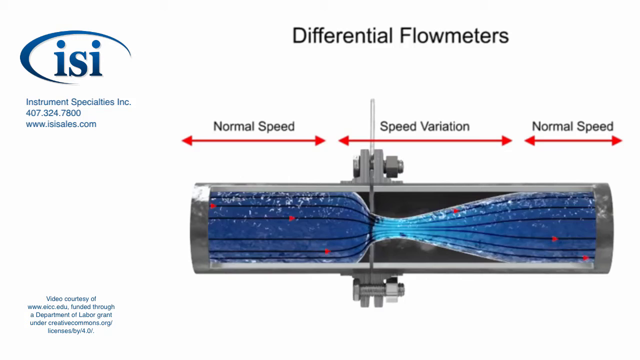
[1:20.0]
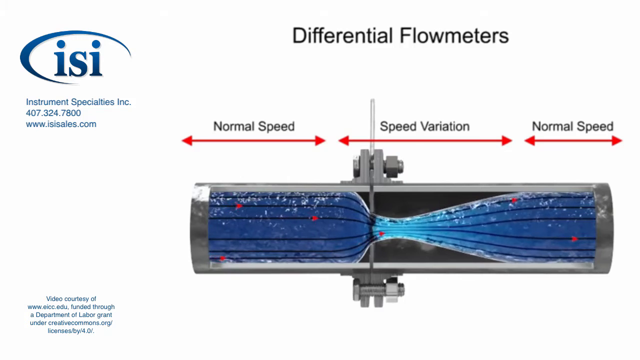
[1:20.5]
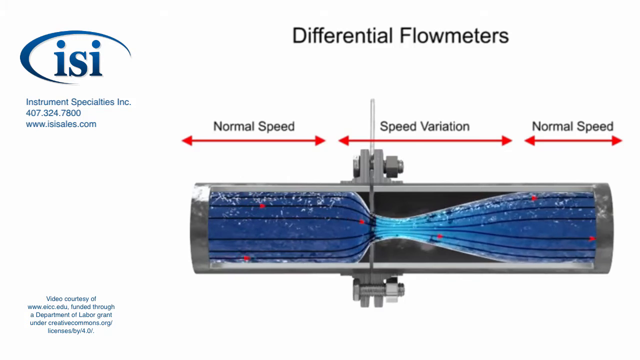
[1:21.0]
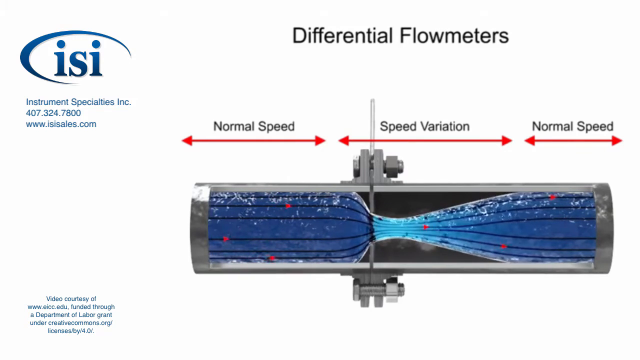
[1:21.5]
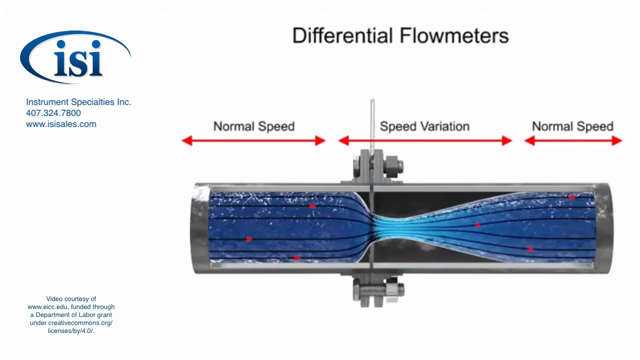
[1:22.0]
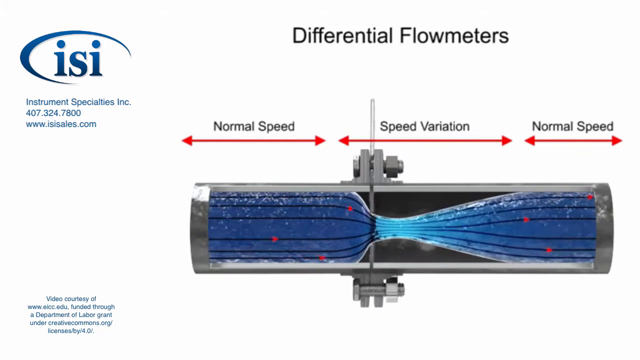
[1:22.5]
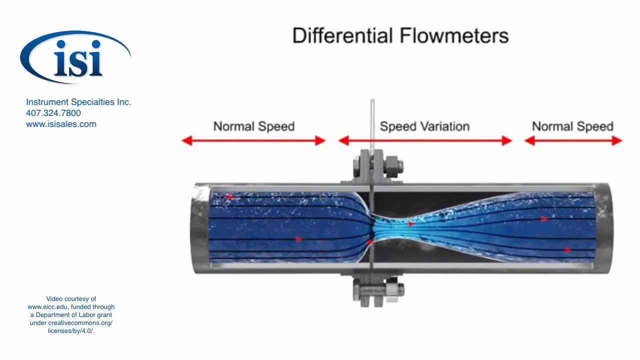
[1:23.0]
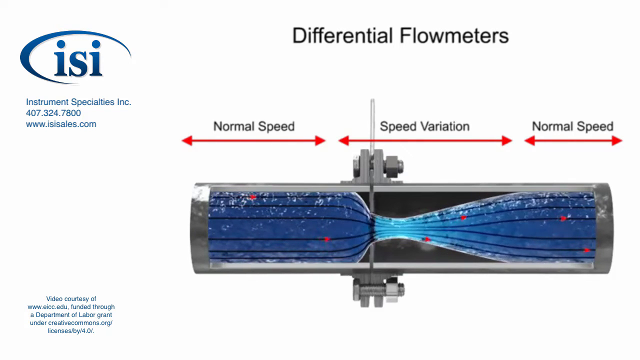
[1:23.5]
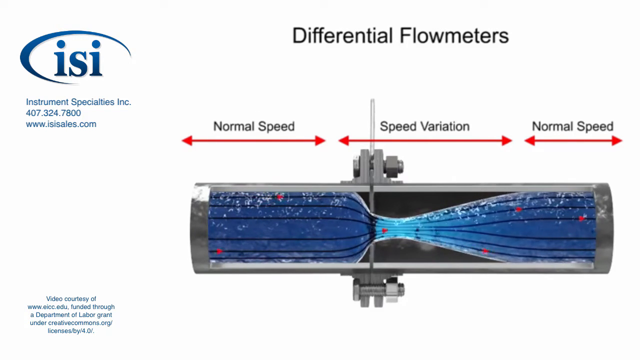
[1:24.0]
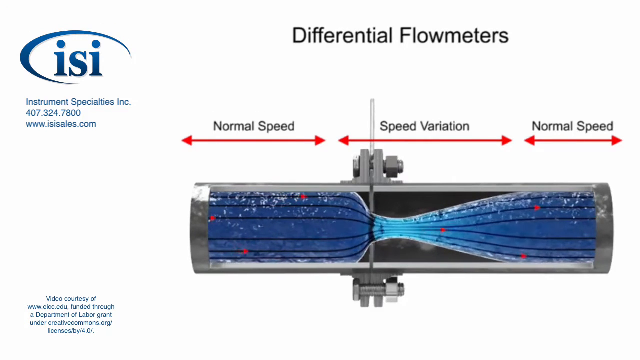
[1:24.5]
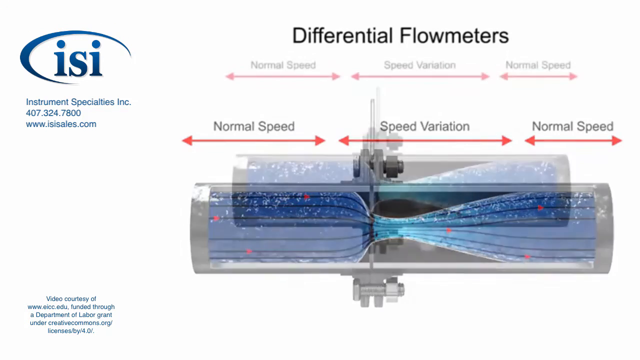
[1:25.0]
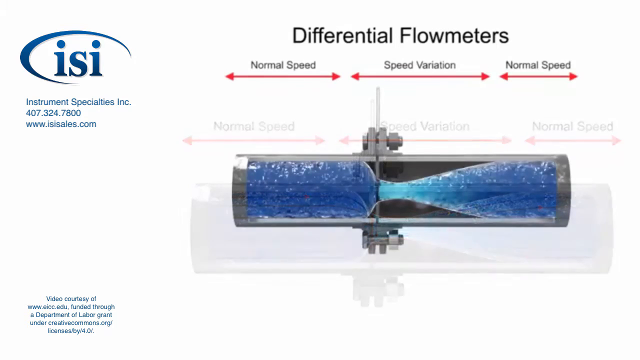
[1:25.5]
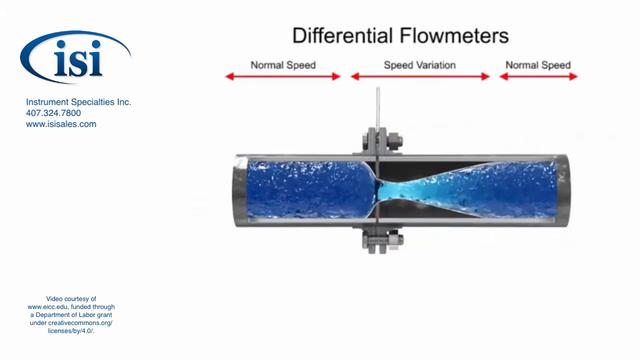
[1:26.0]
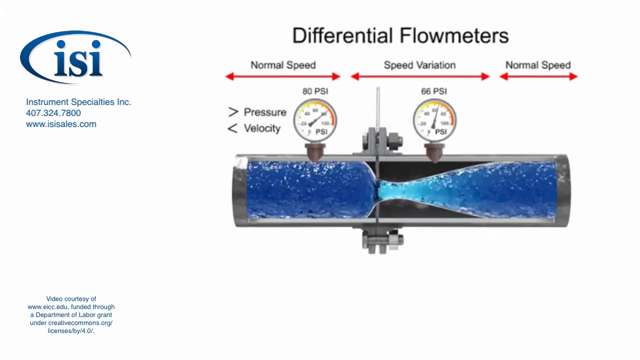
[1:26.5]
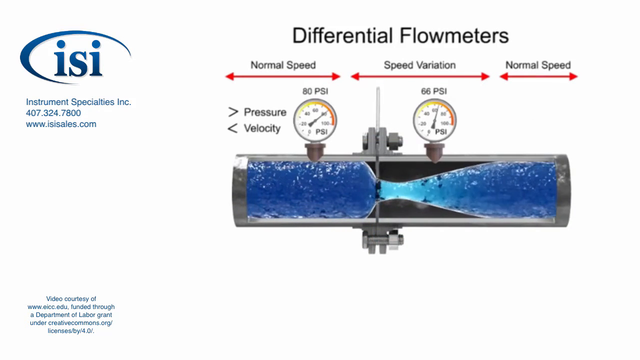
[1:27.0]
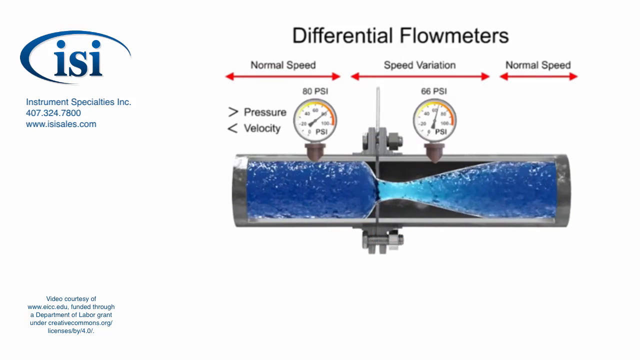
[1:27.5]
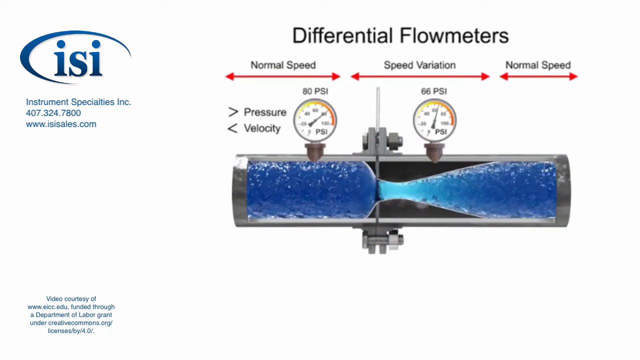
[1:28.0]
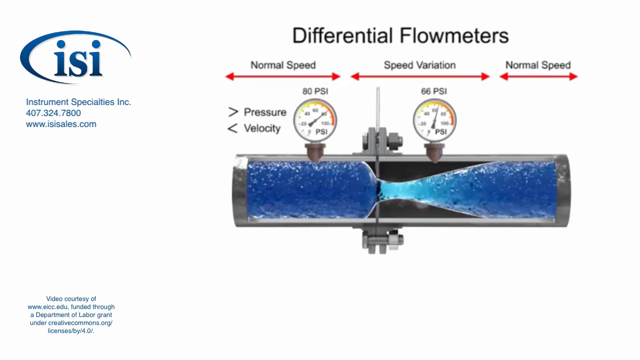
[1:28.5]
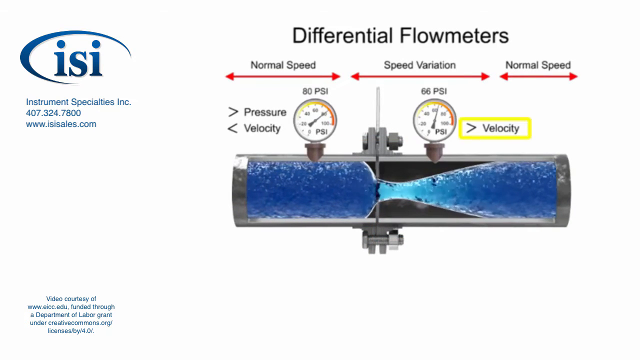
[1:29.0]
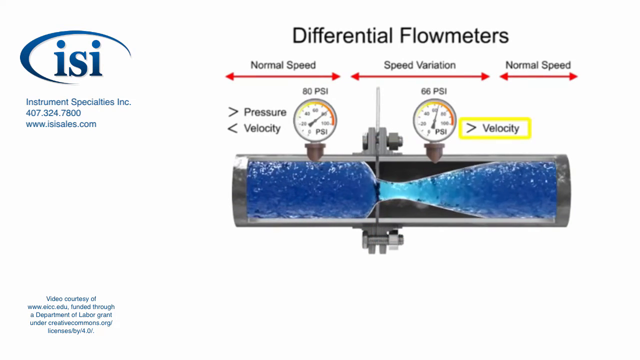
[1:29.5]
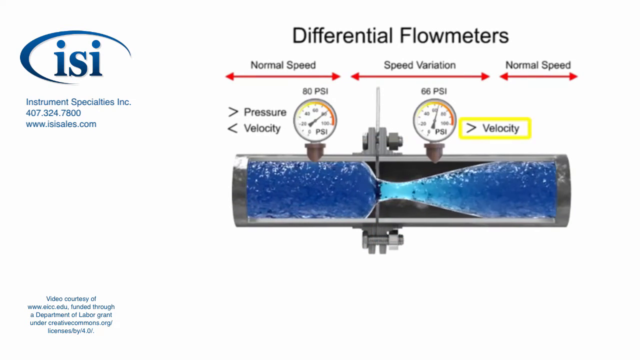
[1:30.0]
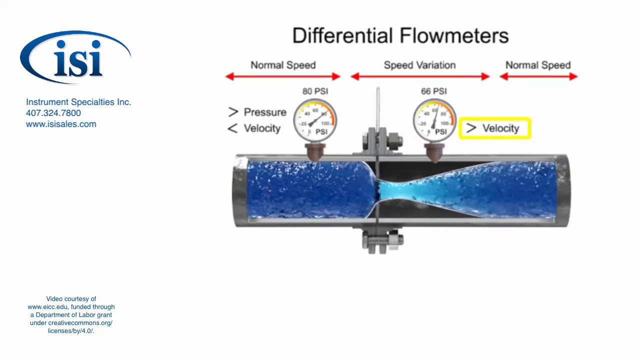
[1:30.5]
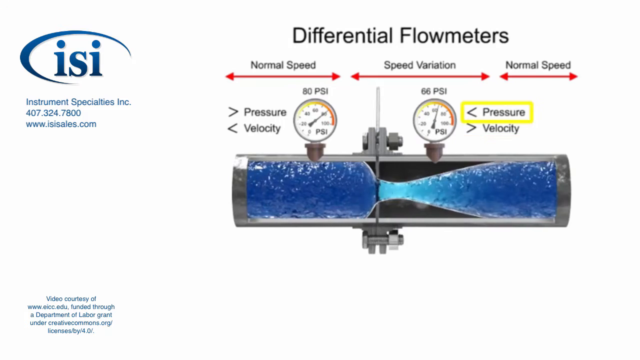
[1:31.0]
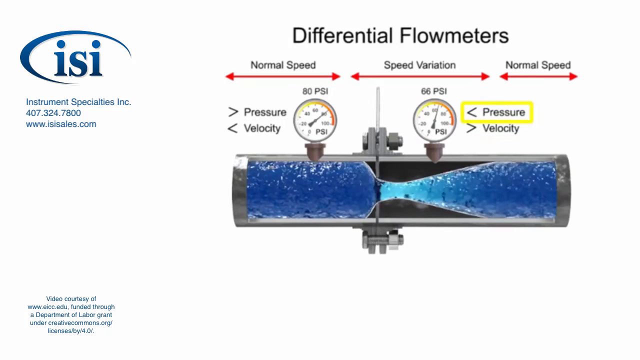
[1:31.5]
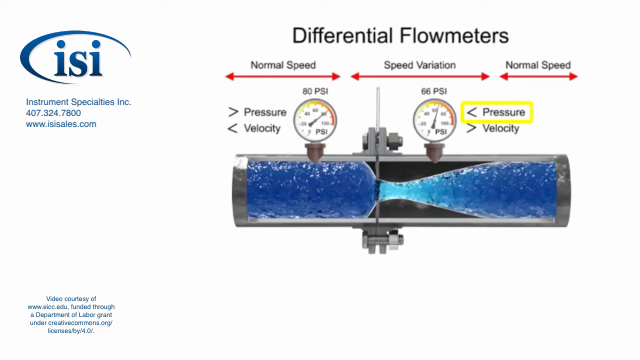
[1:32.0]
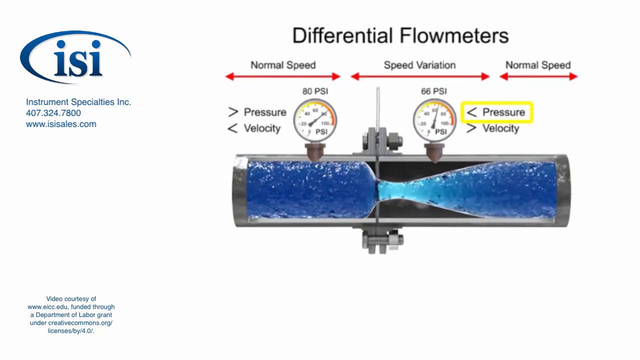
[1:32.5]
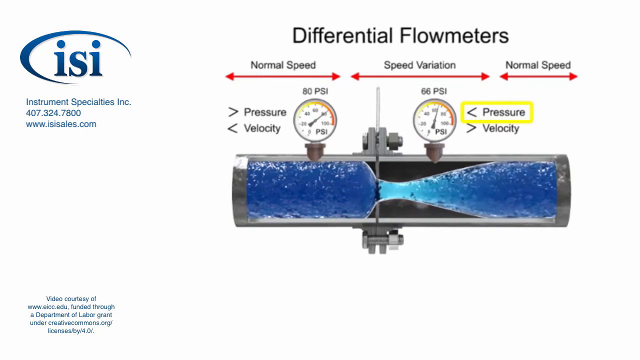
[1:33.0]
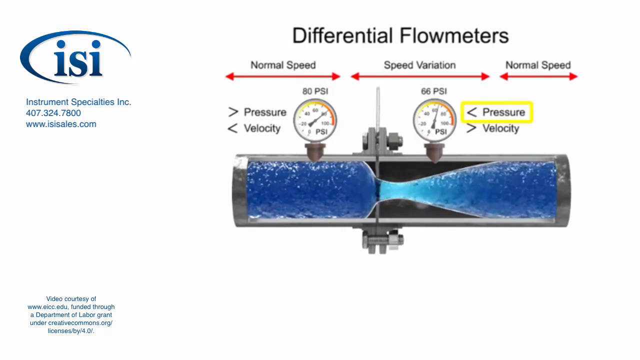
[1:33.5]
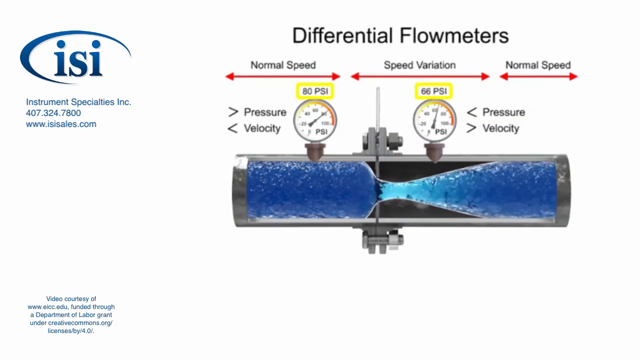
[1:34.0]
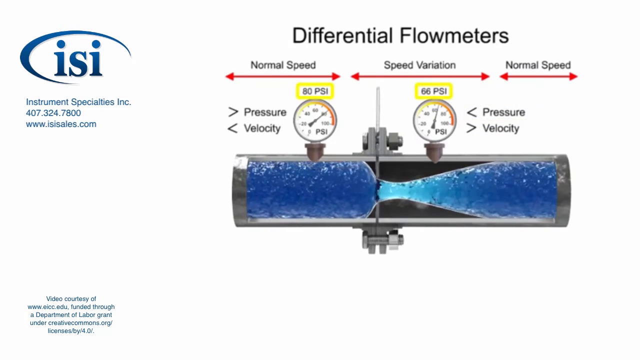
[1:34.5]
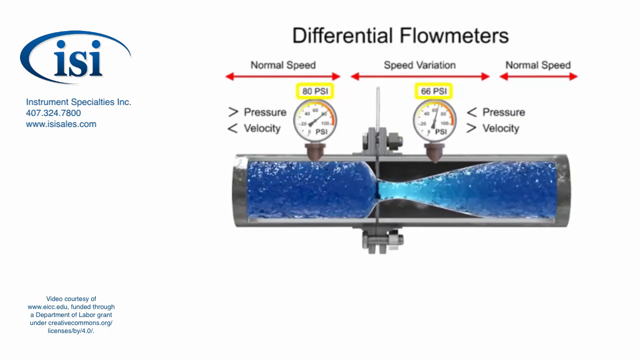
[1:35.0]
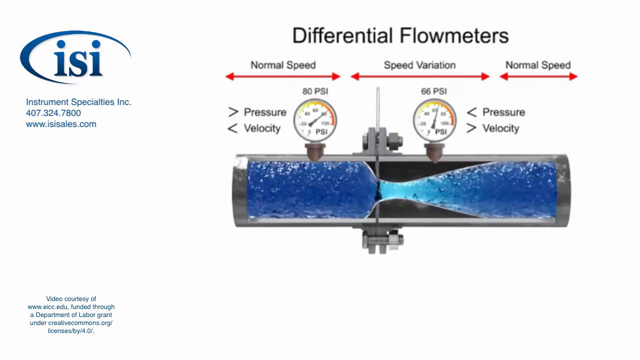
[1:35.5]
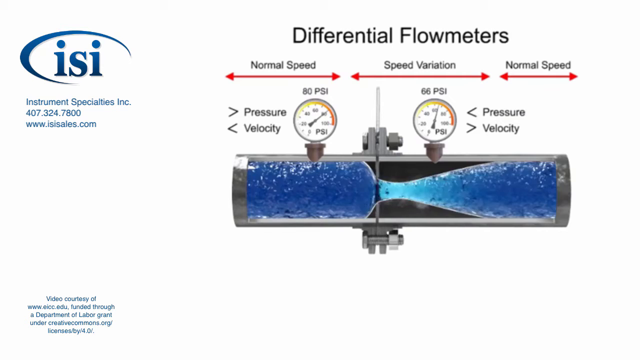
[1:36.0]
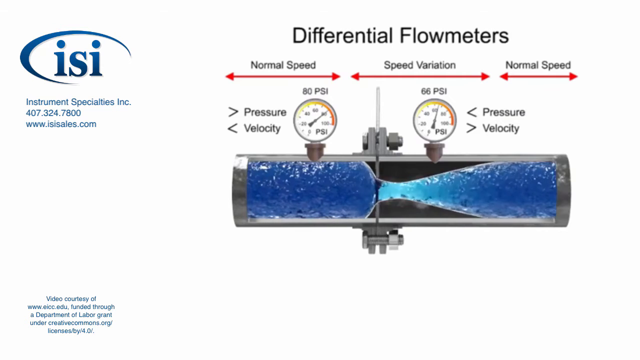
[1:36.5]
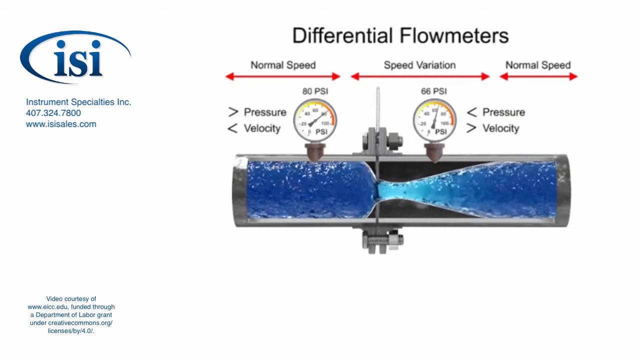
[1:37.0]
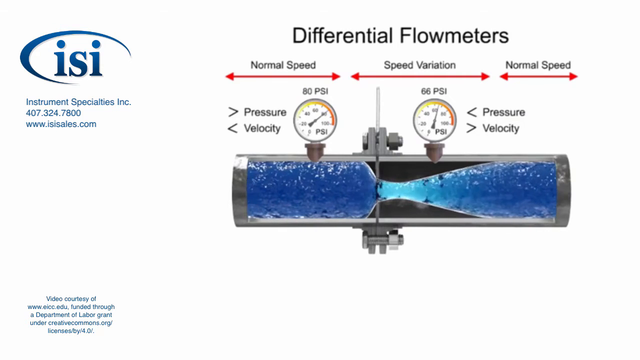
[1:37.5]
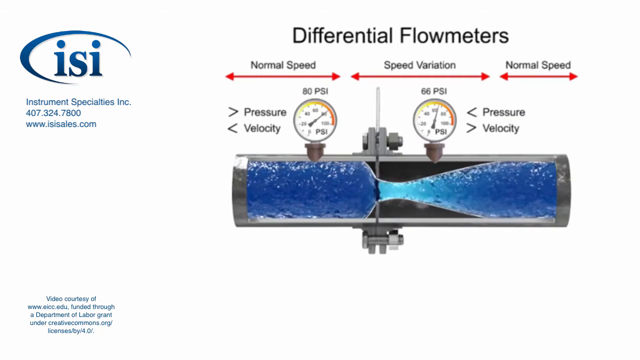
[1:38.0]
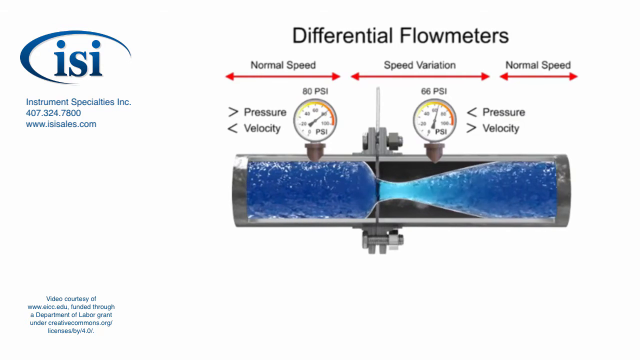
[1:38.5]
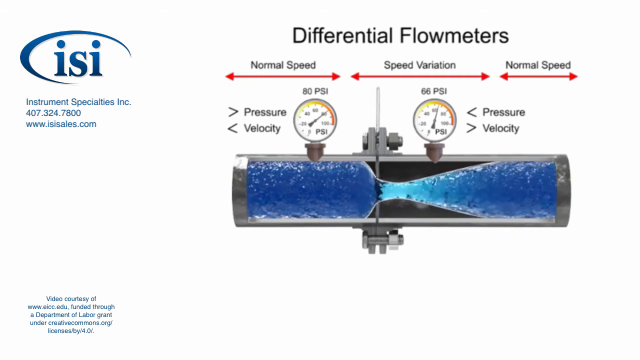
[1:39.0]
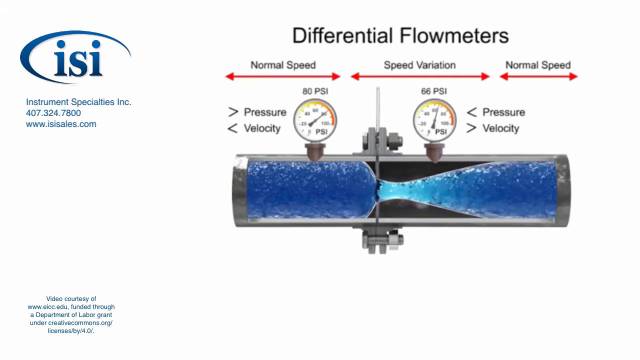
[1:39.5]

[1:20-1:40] An animation of a pipe is on a white background. Above the pipe it says "normal speed", to the right of that "speed variation", and to the right of that "normal speed". Under each term is a red arrow pointing to the left and right sides of the screen. The side of the pipe is cut out, showing water flowing through it. On the left the water is dark blue; it narrows into something like a cone, turns light blue in the middle, then goes back out to its normal shape, so it sort of looks like an hourglass. Red dots flow through it, showing how the water's speed increases as it reaches the center. Then the same diagram appears with two gauges on top of the pipe. The gauge on the left has "80 psi" above it and the gauge on the right has "66 psi" above it. Next to the gauge on the left are a greater than sign with "pressure" and a less than sign with "velocity"; next to the gauge on the right are a greater than sign with "velocity" and a less than sign with "pressure". These are highlighted by a yellow square.